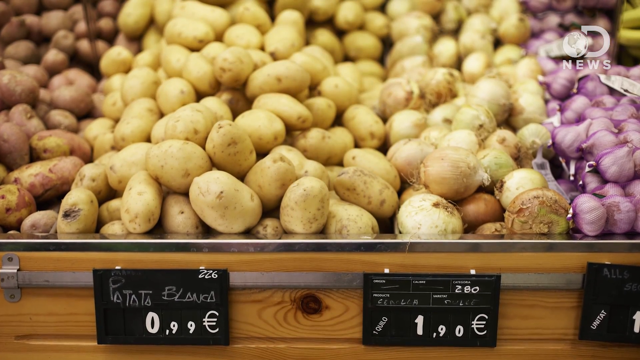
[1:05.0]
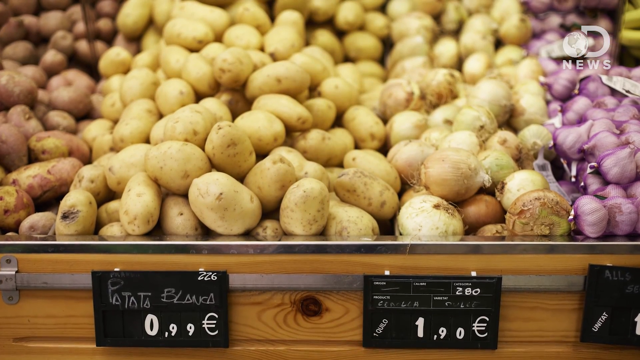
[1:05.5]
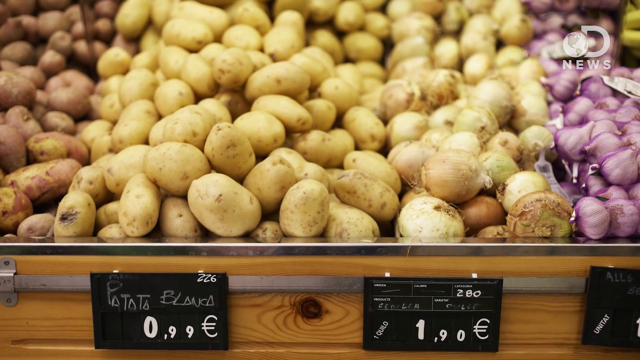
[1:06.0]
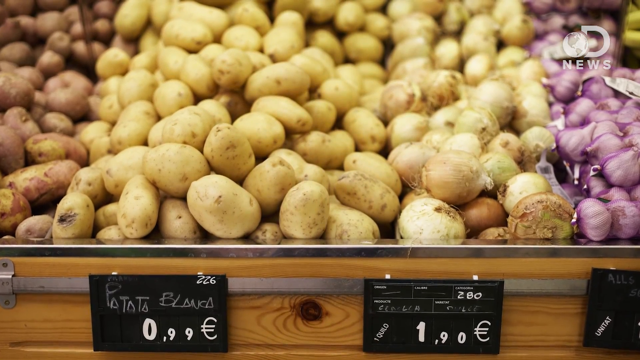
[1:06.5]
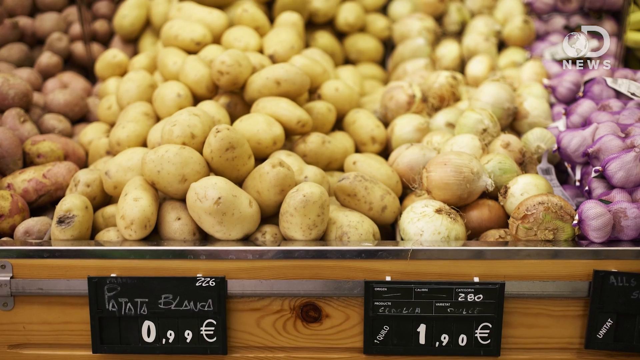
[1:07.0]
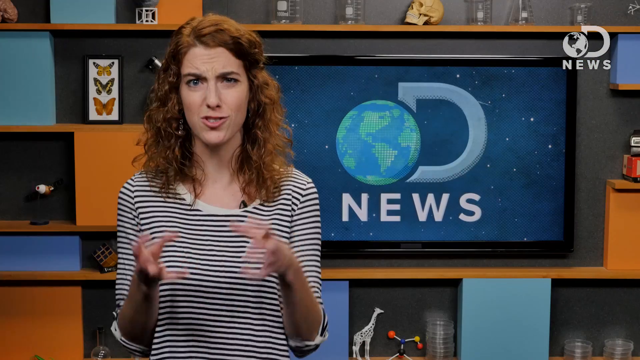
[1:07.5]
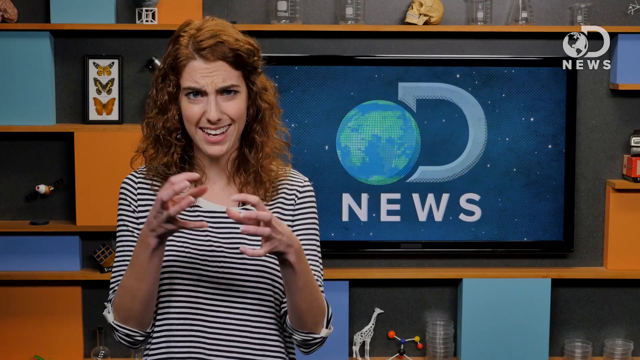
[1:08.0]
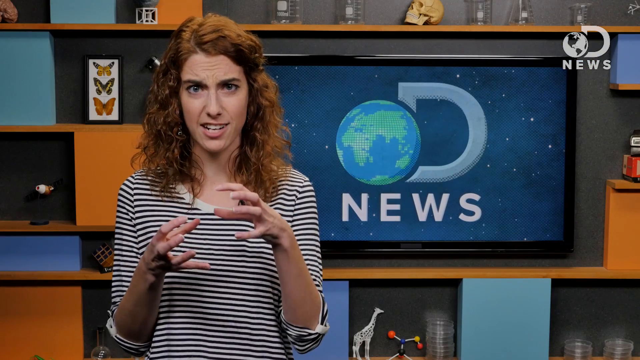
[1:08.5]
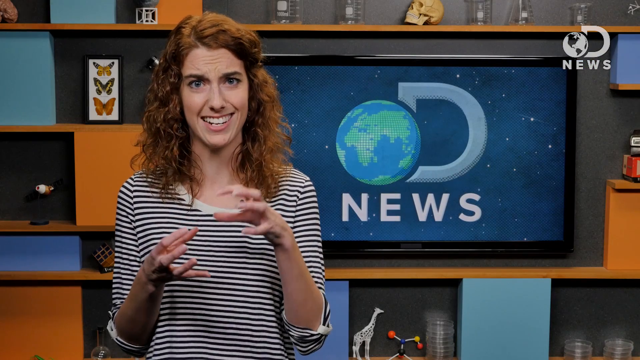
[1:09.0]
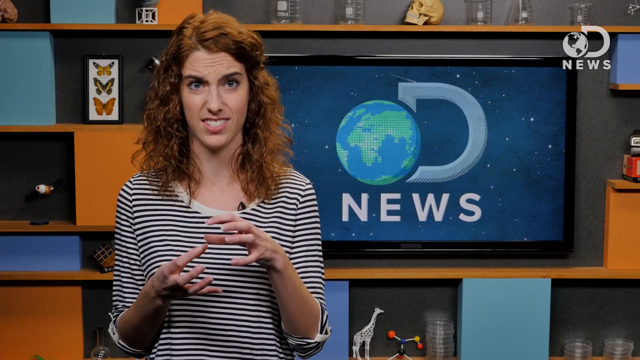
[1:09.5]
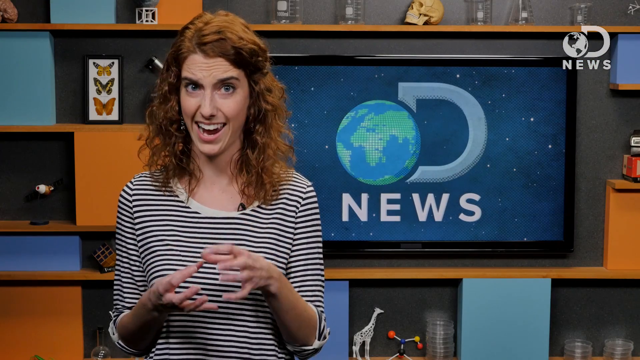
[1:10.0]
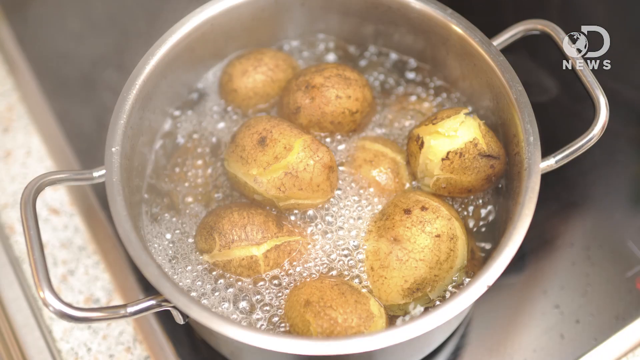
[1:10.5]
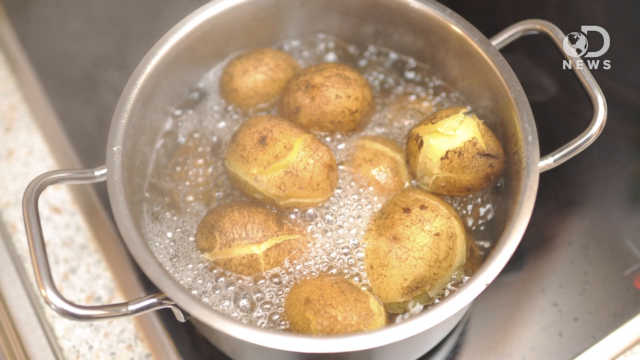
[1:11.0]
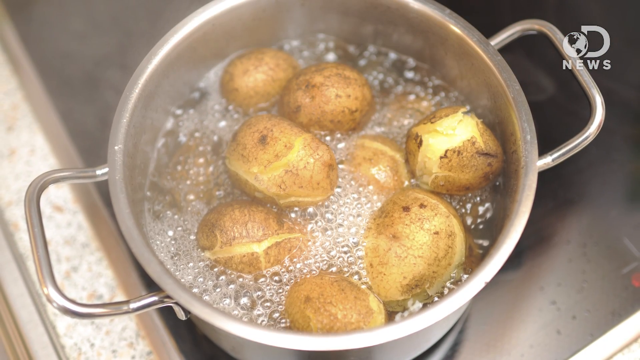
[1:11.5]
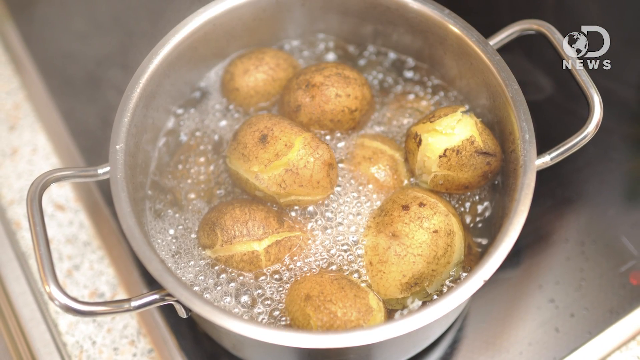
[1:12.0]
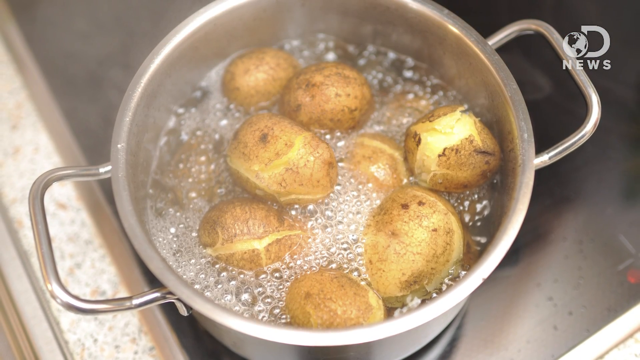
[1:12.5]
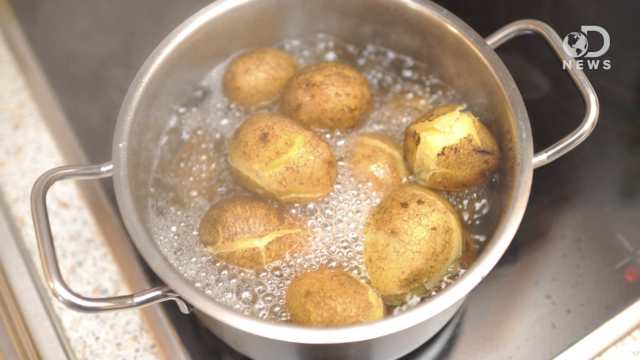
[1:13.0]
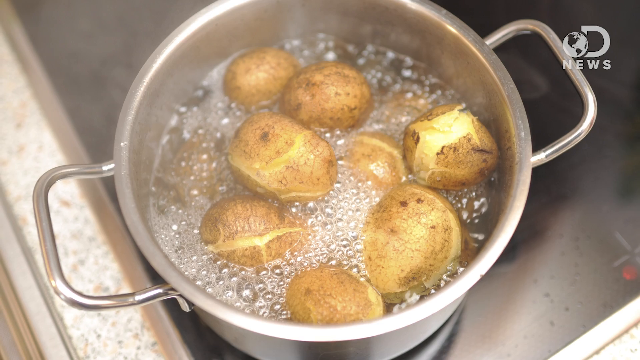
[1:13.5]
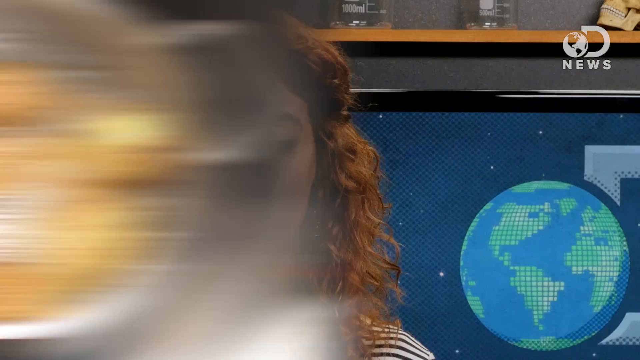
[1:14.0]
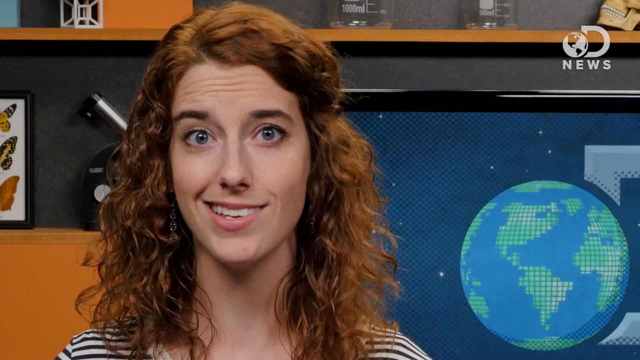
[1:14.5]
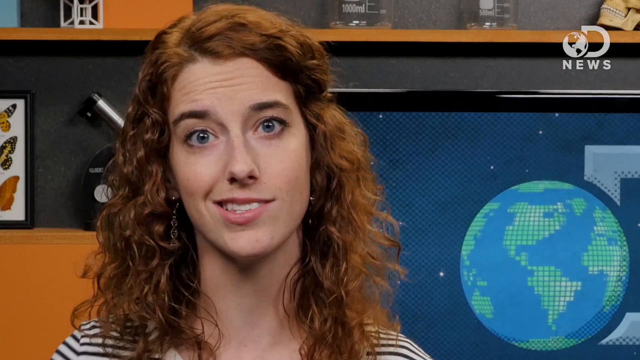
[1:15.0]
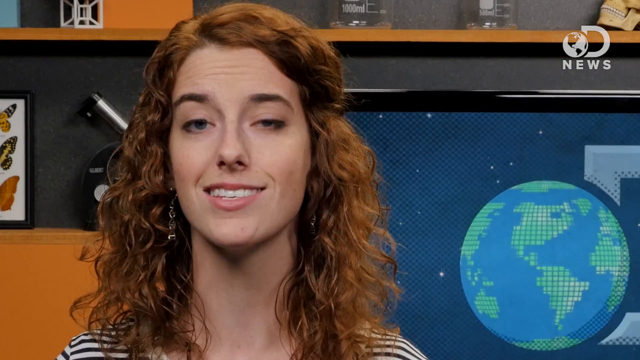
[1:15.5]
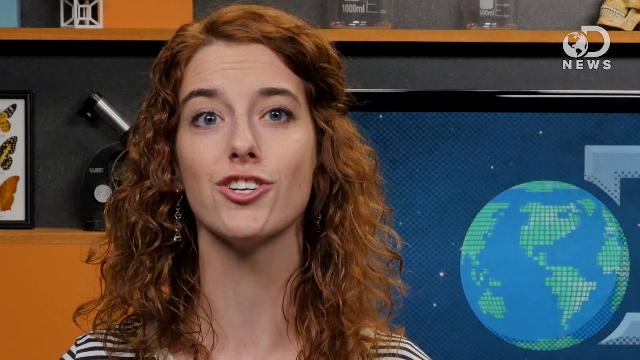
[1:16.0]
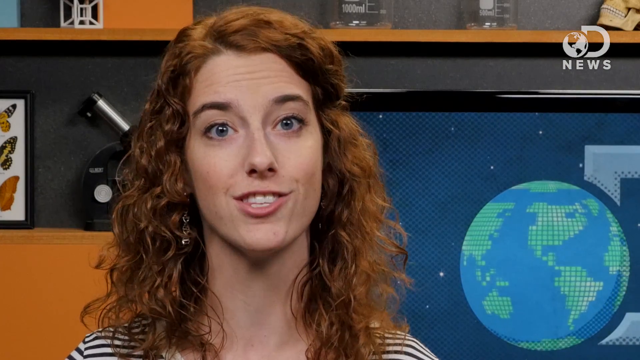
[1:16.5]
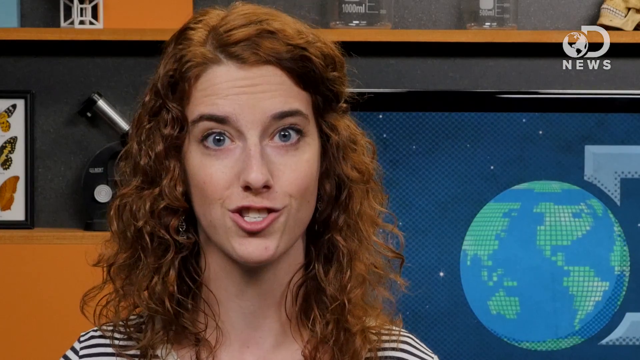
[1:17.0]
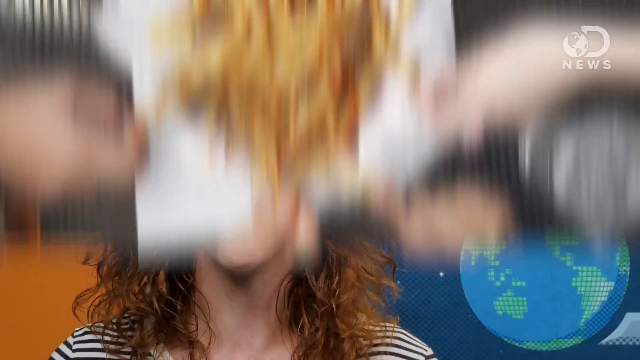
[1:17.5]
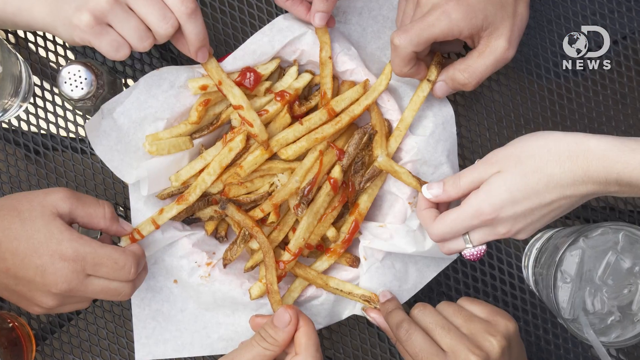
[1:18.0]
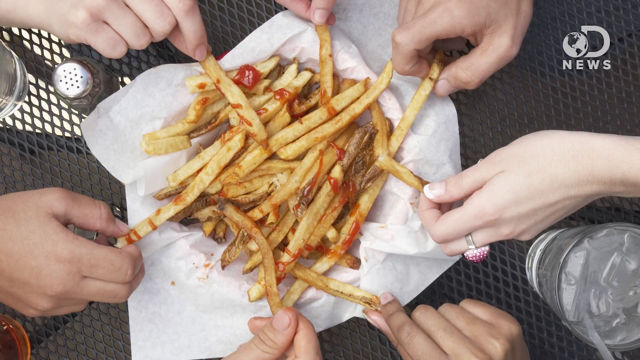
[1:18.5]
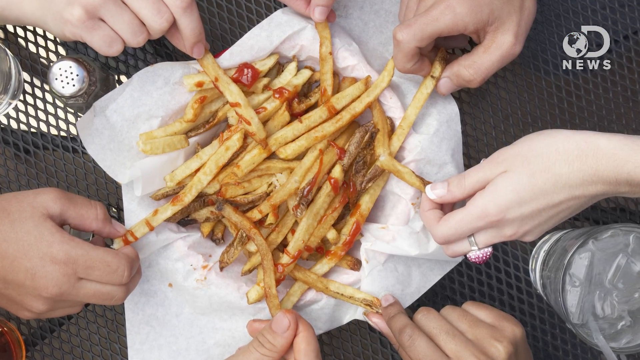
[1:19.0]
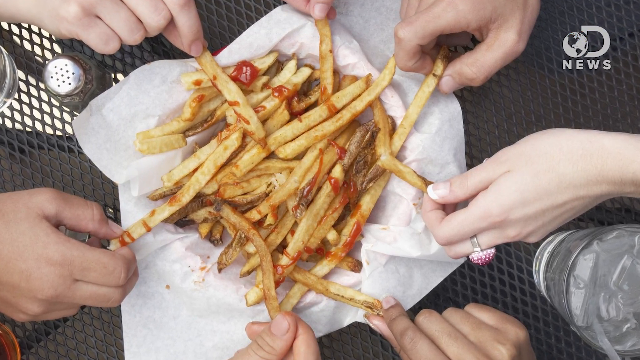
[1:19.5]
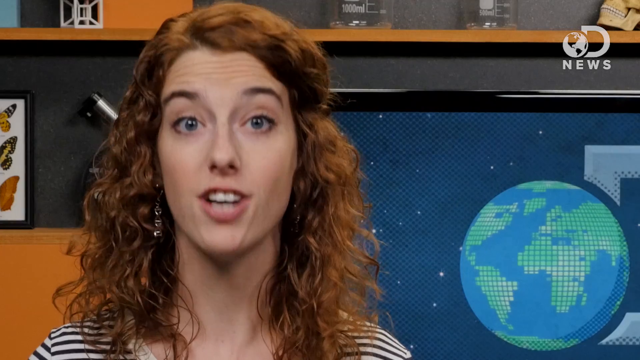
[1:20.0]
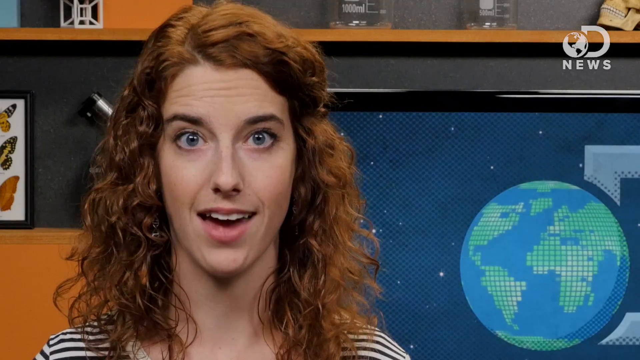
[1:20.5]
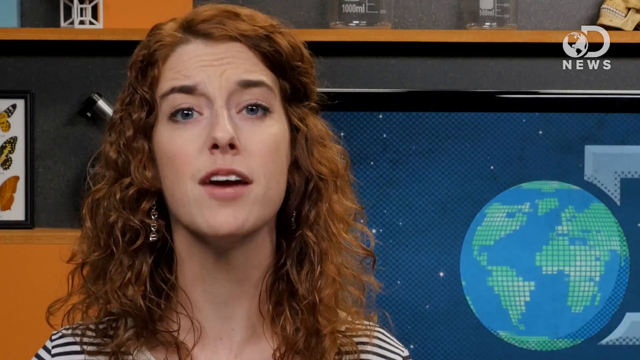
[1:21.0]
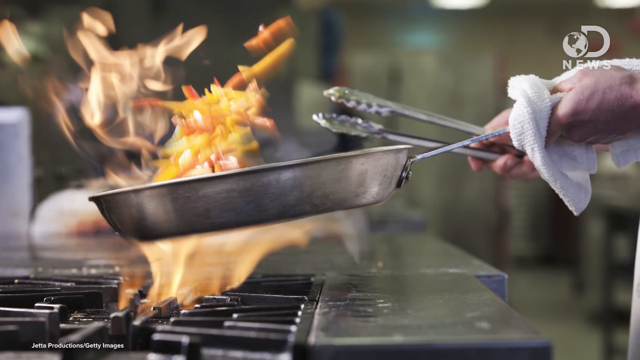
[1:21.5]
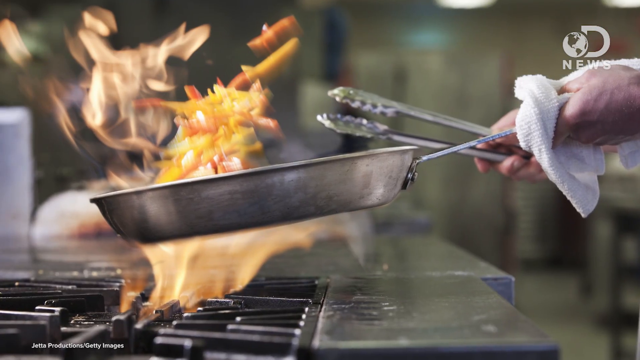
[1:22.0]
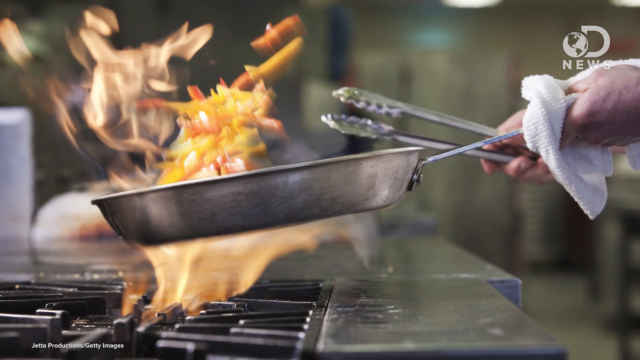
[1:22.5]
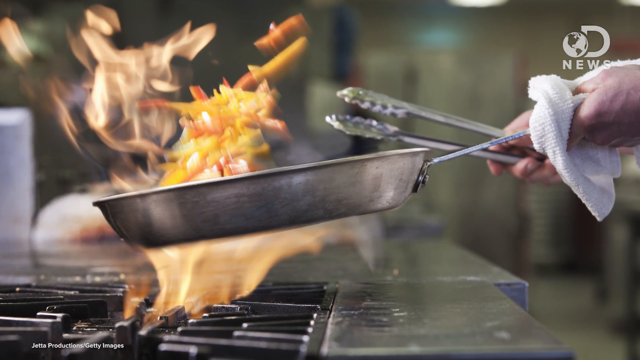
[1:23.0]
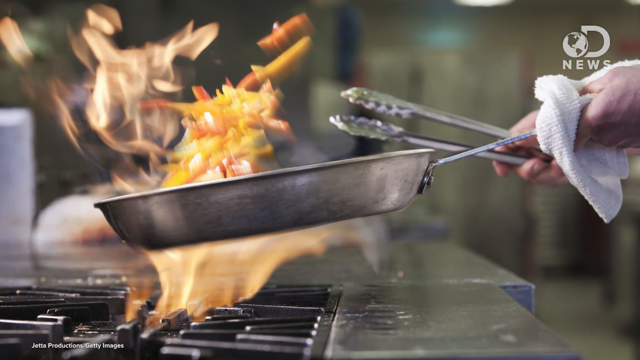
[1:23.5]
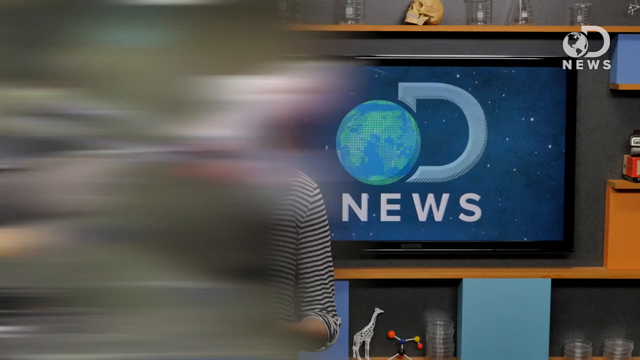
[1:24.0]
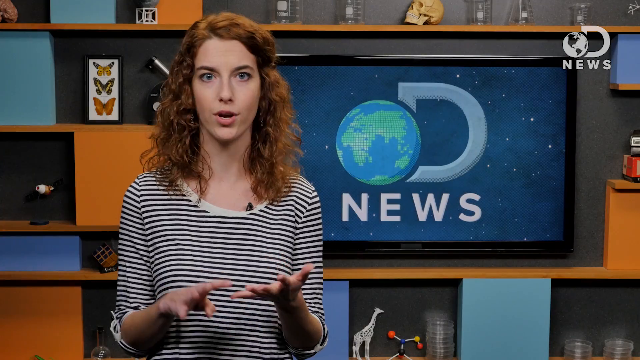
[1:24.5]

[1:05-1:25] The video reads "Can you trust the calorie counts on food?" It starts with a picture of potatoes in a grocery store, then goes to a red-haired woman narrating or hosting the news segment. Potatoes boil in a pot of water on a stove. After the woman speaks, a plate of french fries appears, then a chef sautéing something in a pan that cannot be made out. The video goes back to the woman, shows the boiling pot of potatoes again, then the plate of french fries, then the woman, then the chef sautéing in a pan, and then the grocery store bin of potatoes and garlic. It continues with the french fries and repeats the same pictures.